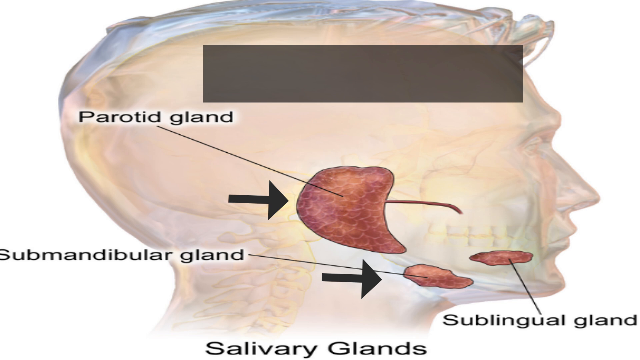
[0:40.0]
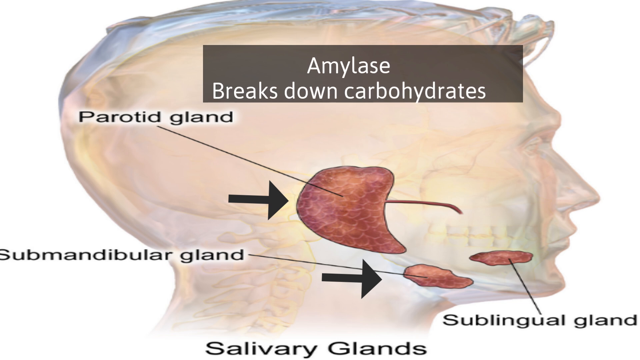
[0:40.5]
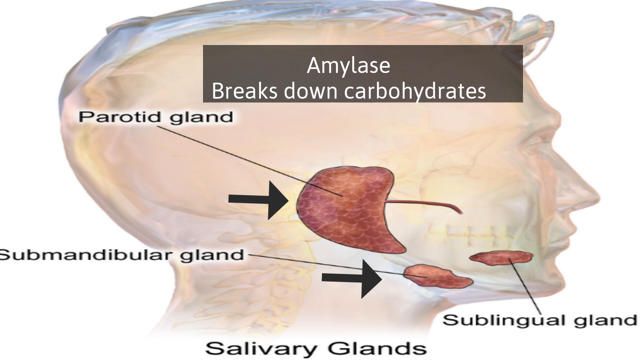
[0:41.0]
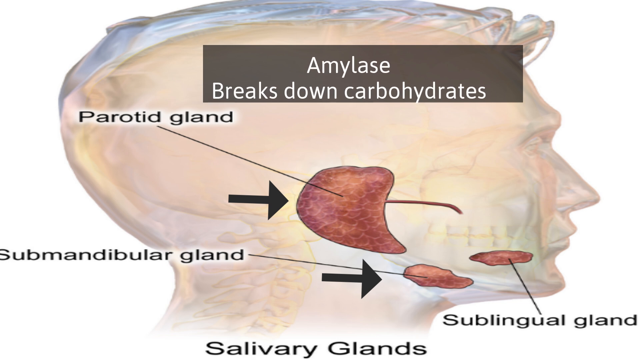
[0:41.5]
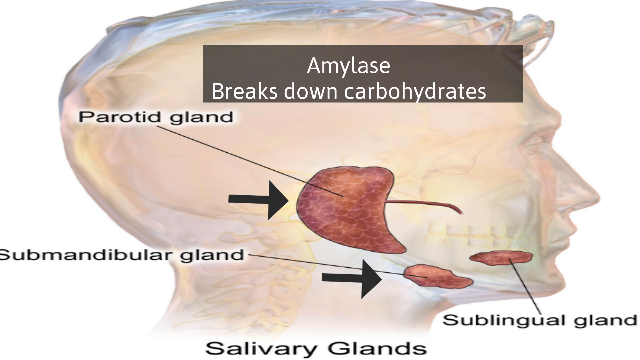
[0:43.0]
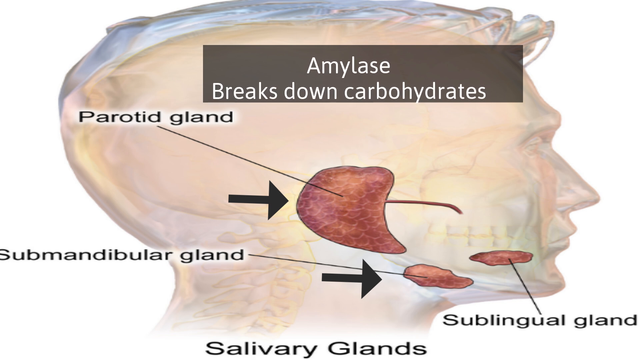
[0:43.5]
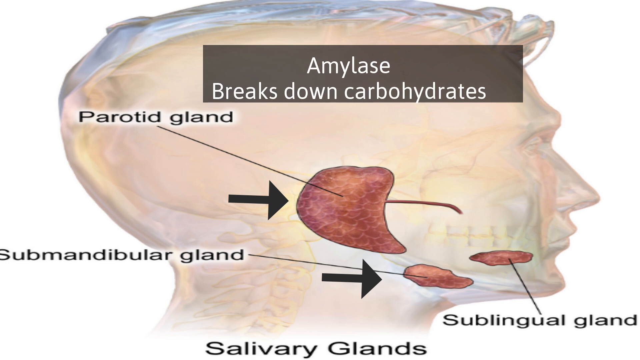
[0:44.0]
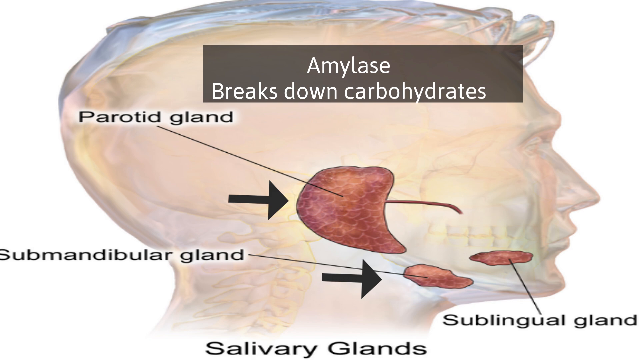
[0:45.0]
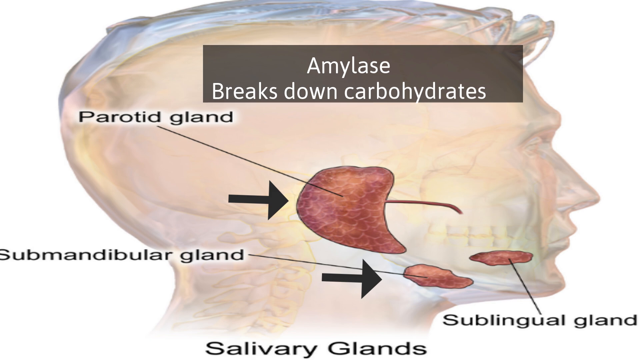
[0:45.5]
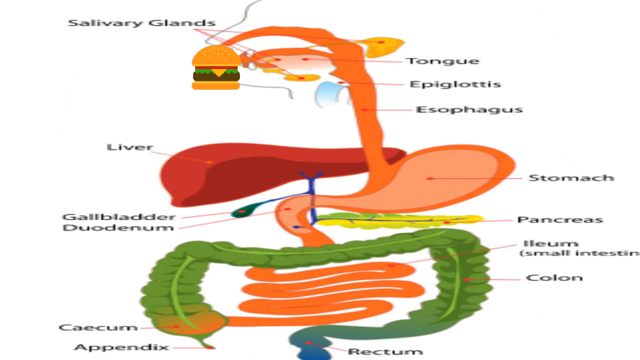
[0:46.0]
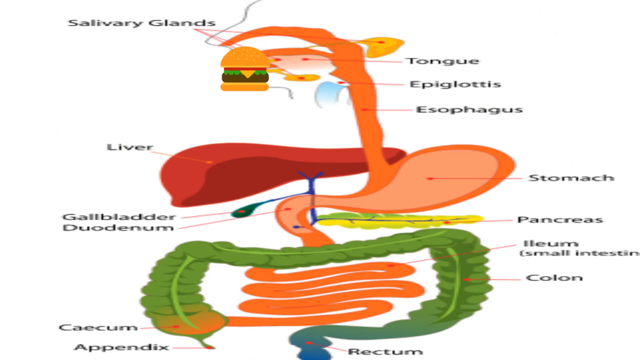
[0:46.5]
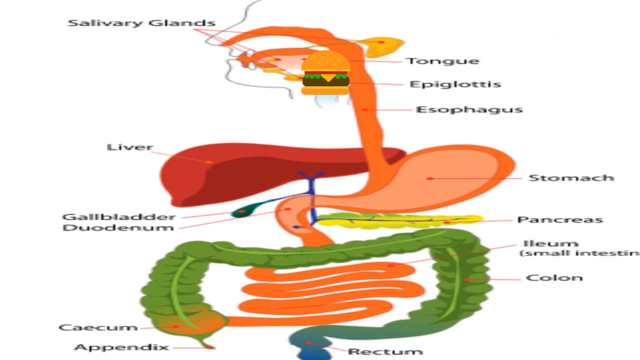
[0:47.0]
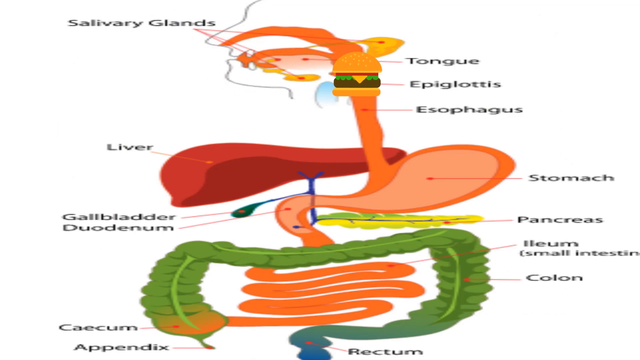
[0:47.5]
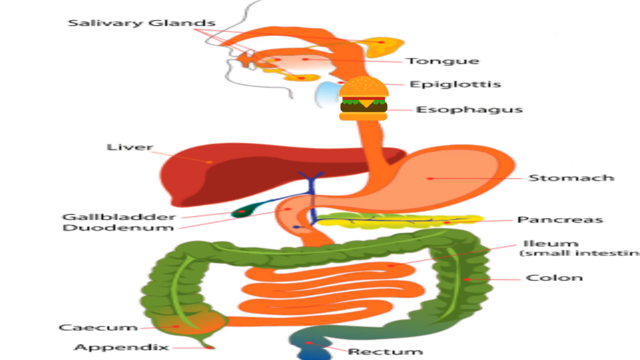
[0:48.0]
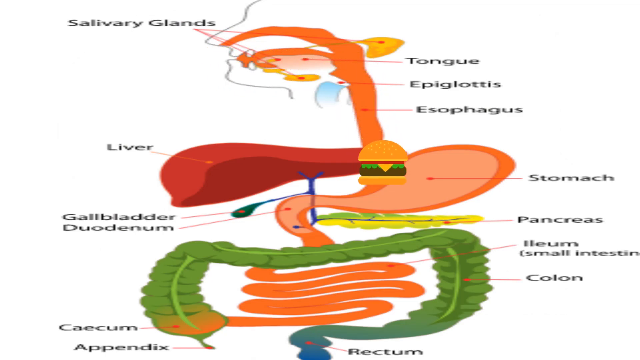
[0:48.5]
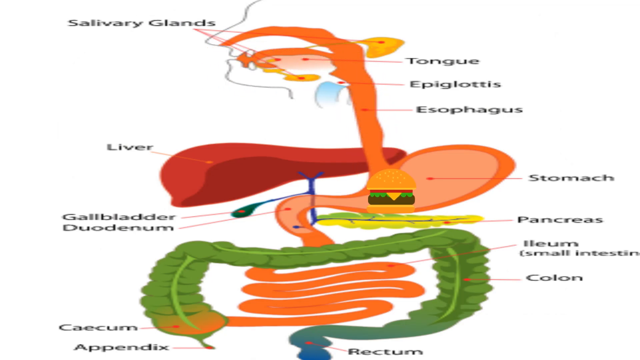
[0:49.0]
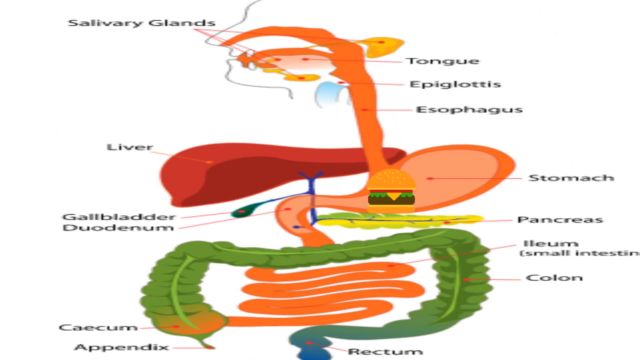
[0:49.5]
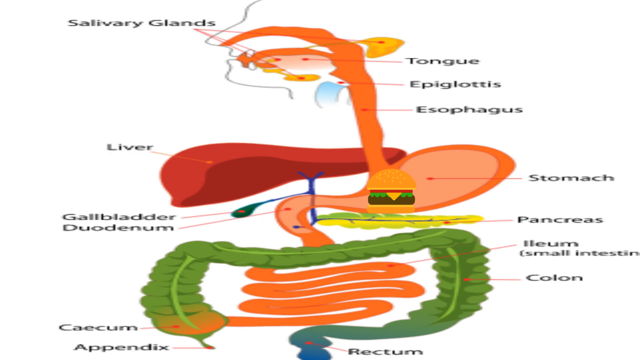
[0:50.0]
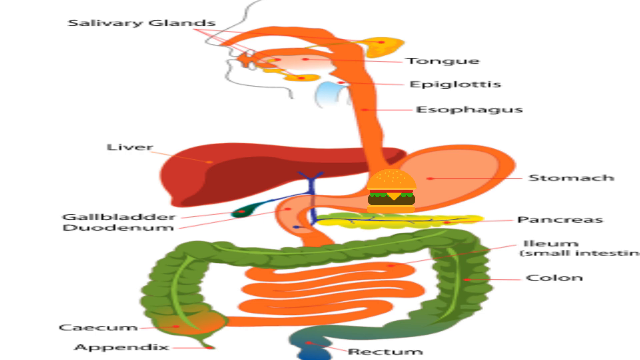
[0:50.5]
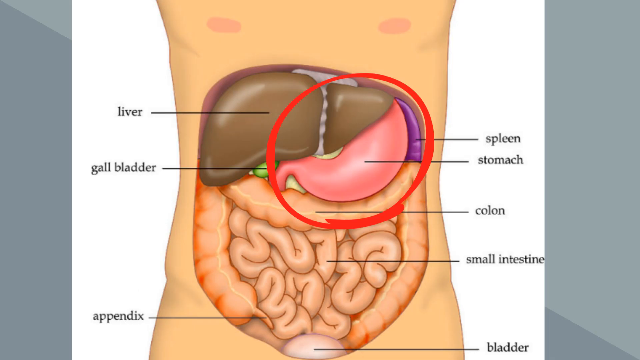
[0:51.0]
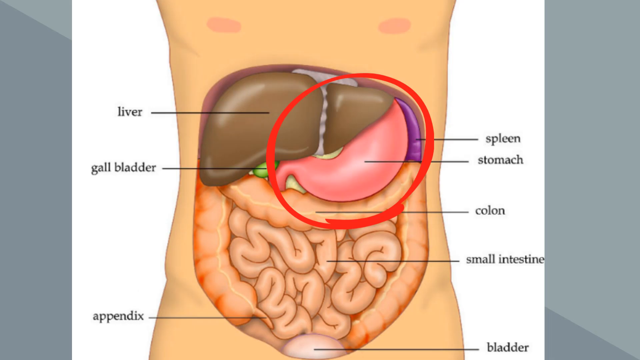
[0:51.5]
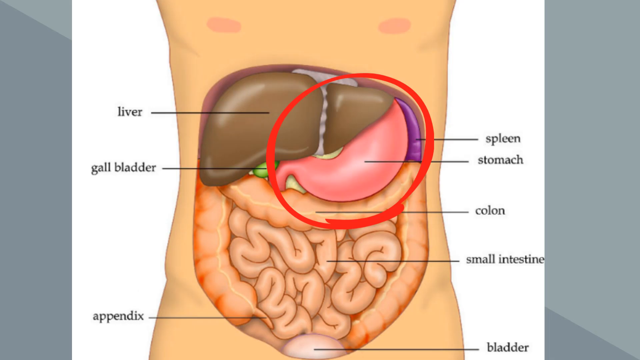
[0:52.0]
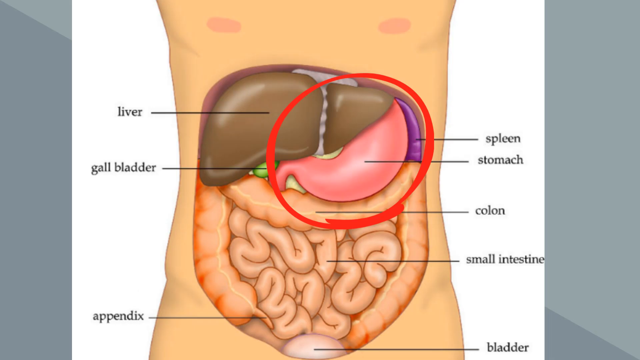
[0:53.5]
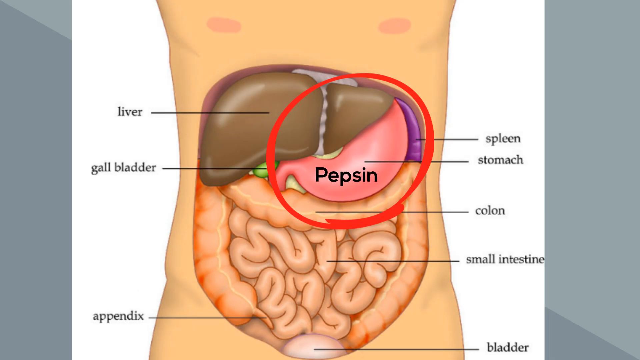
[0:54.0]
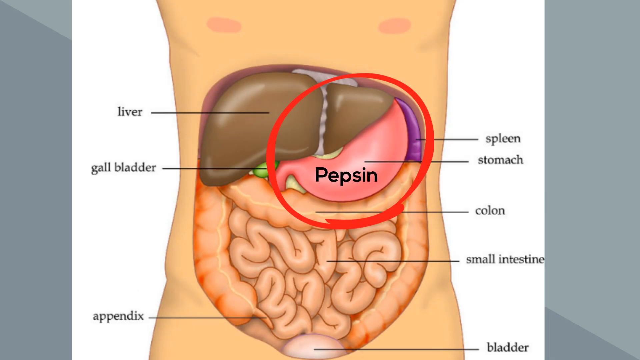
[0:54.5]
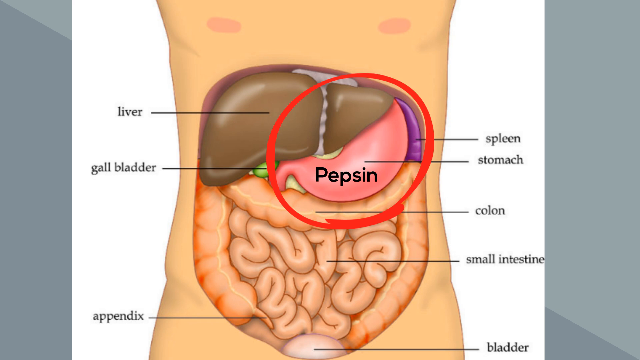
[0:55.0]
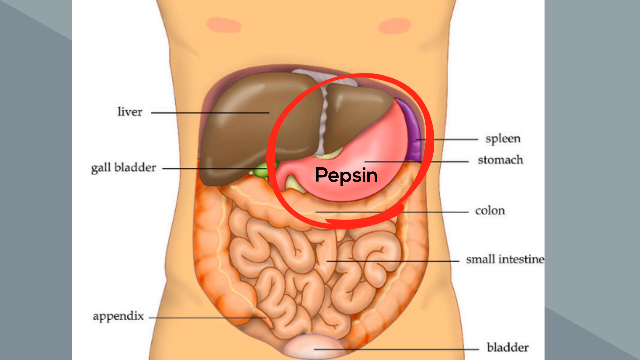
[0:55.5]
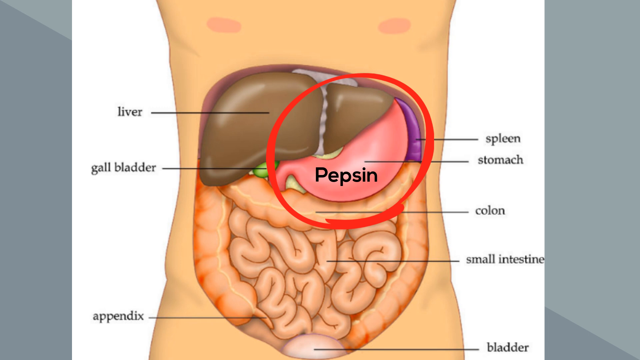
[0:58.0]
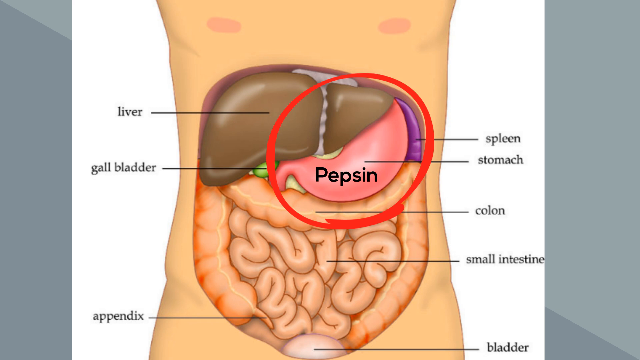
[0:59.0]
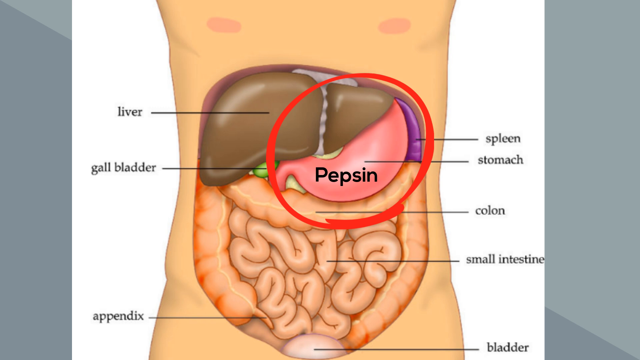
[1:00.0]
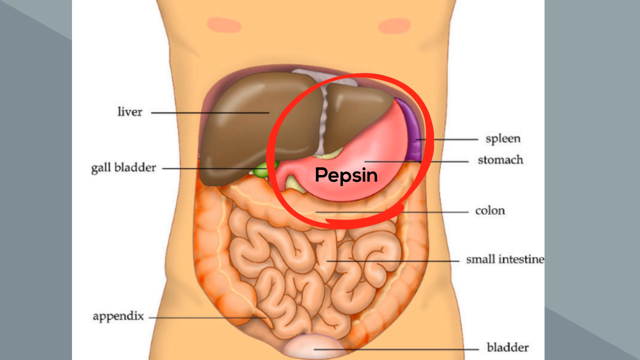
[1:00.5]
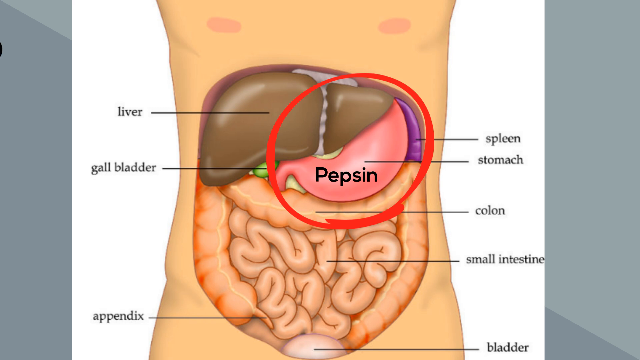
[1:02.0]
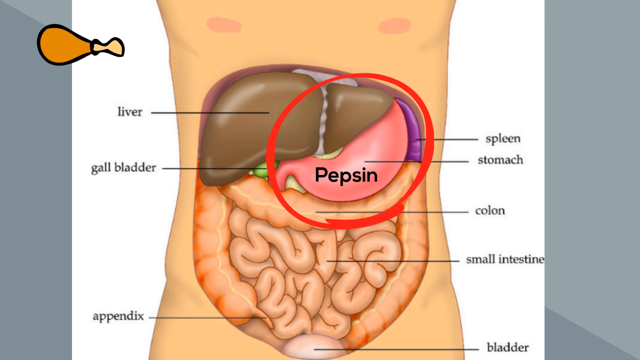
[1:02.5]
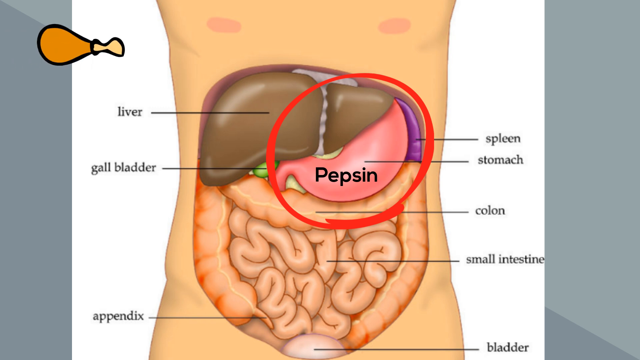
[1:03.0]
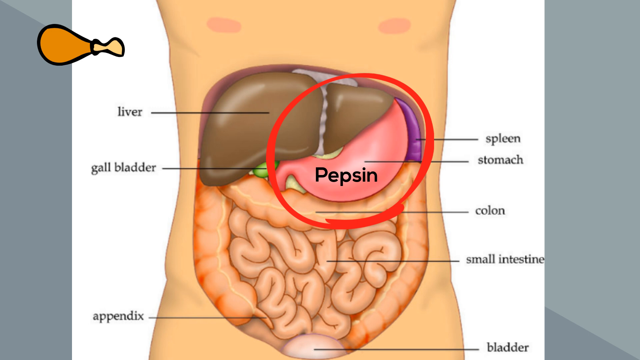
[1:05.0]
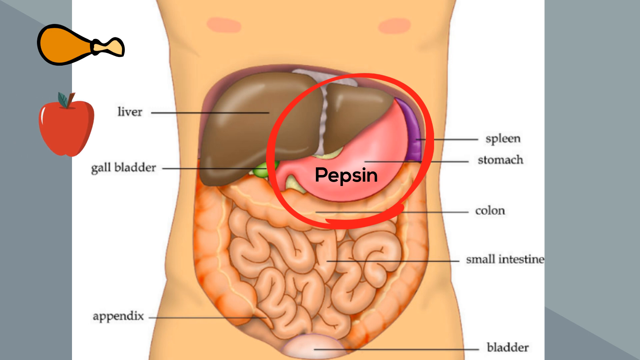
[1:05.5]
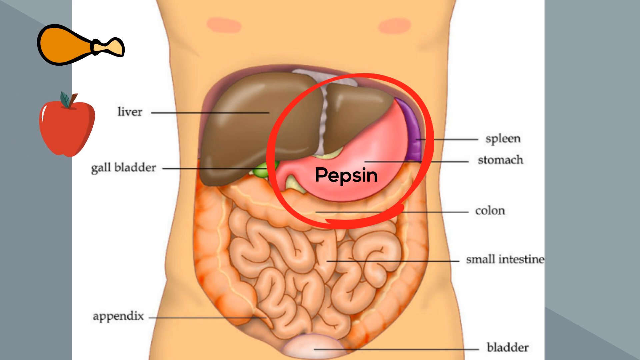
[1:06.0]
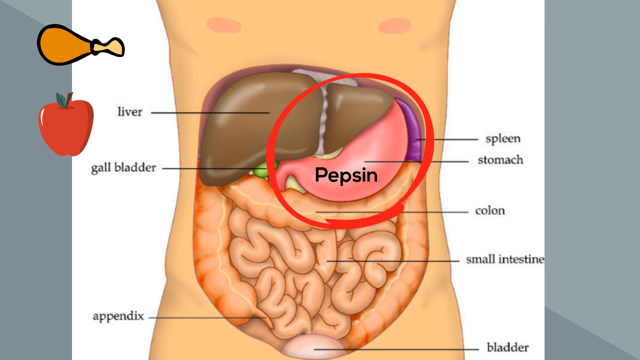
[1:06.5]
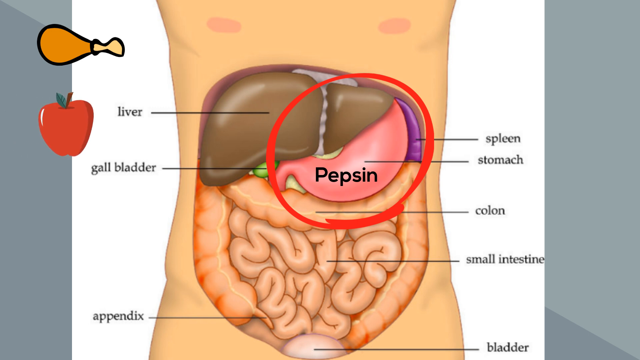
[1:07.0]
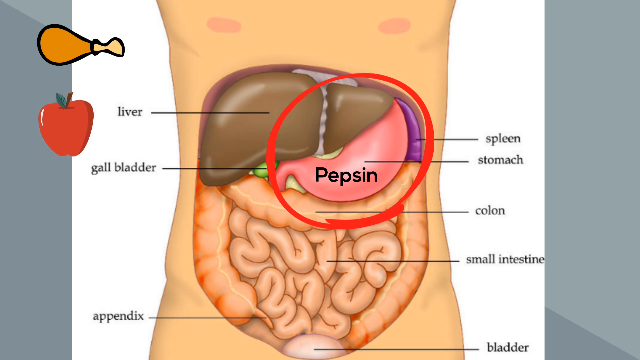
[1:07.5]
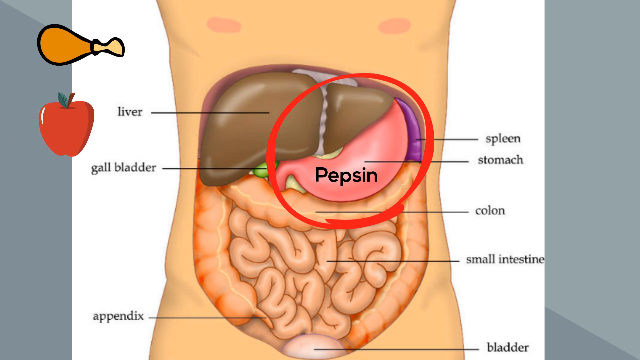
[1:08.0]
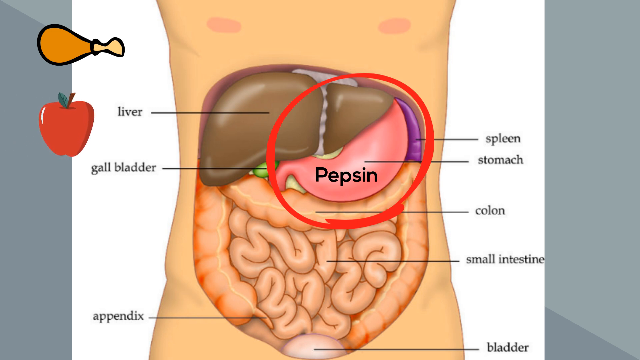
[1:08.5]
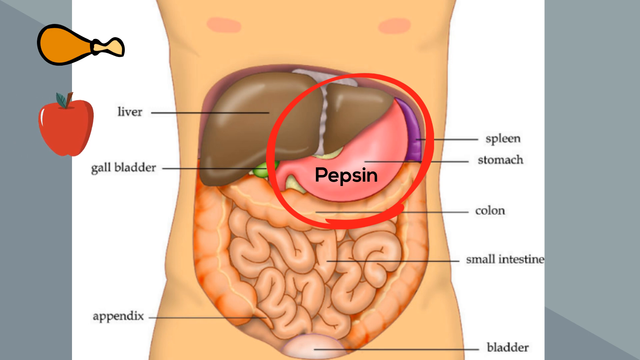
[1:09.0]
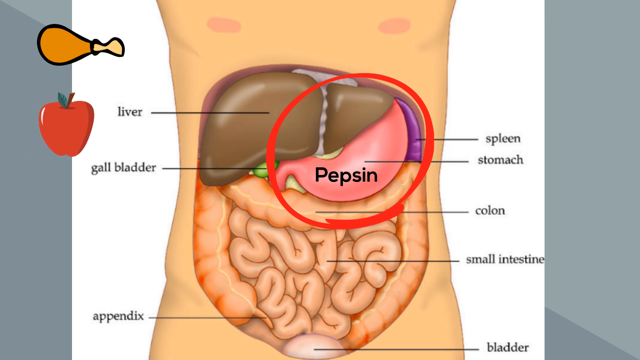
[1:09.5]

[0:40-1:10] Half of a gland is shown along with two small glands, one of them the sublingual gland. A picture shows the humerus, the pelvis, the stomach, the spleen, the anus and the intestine, and there are also chicken and pork.